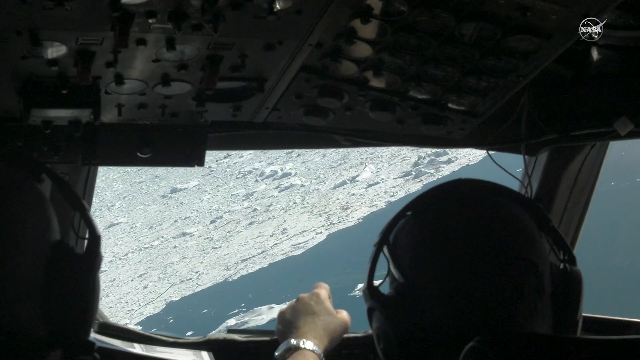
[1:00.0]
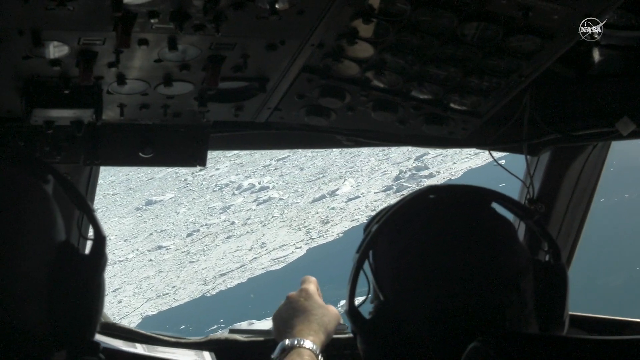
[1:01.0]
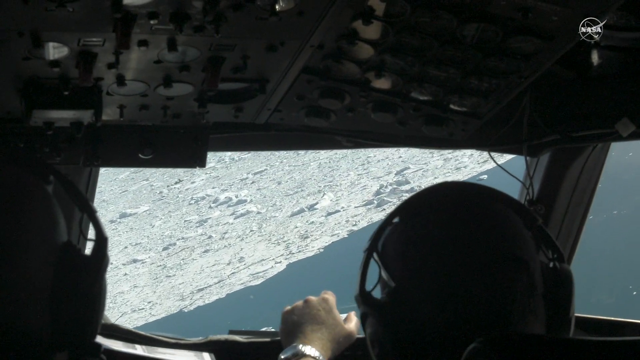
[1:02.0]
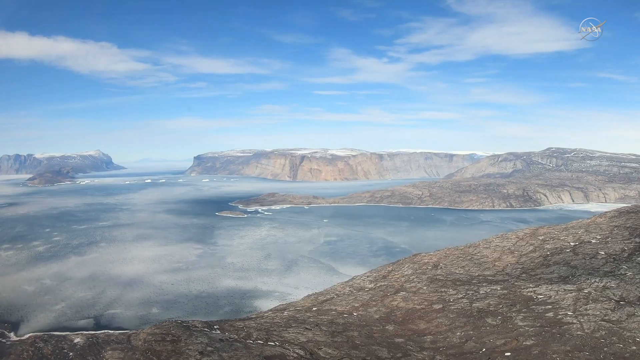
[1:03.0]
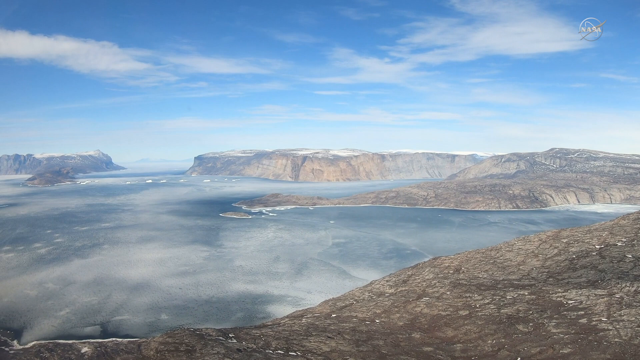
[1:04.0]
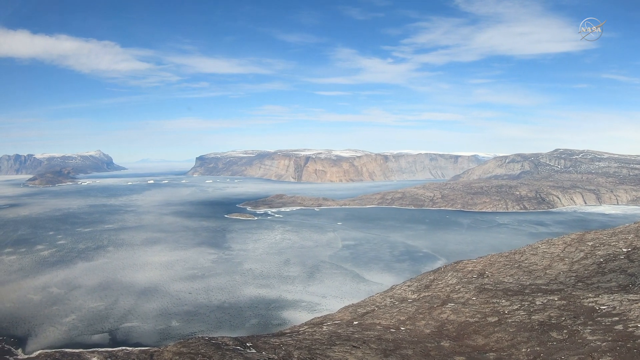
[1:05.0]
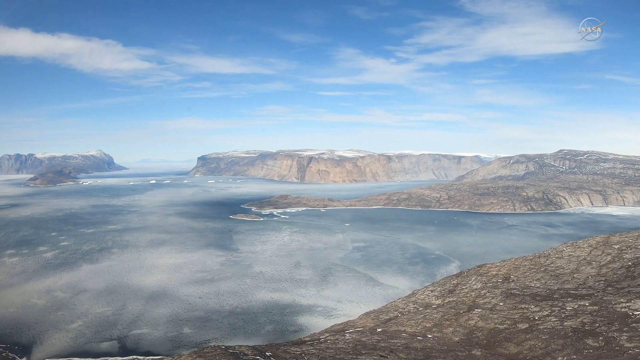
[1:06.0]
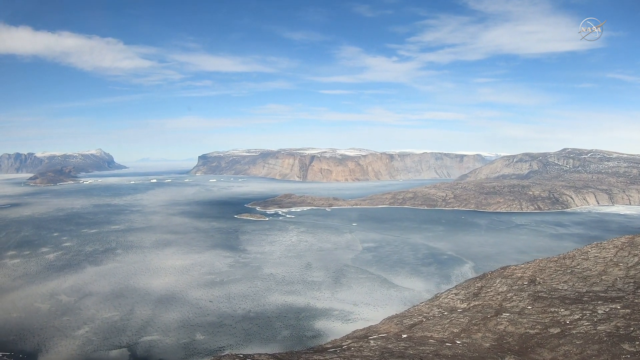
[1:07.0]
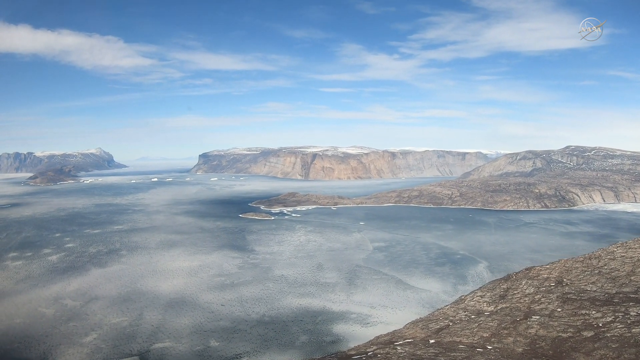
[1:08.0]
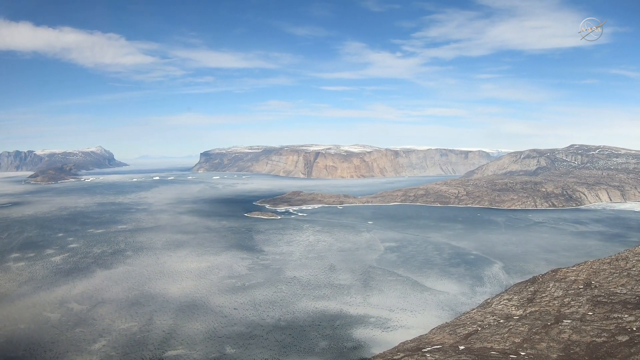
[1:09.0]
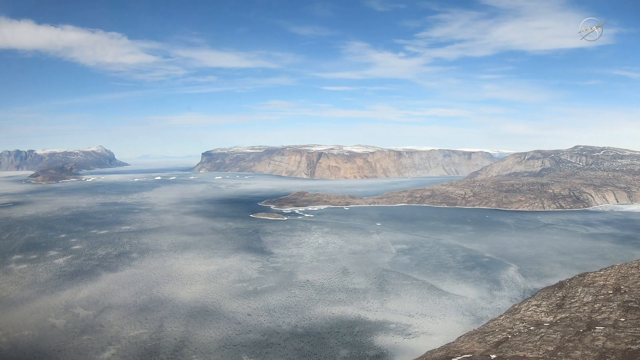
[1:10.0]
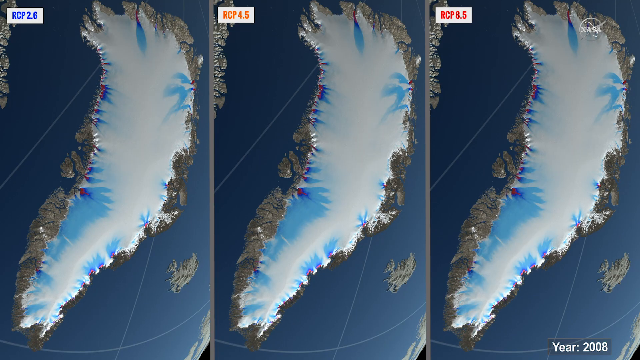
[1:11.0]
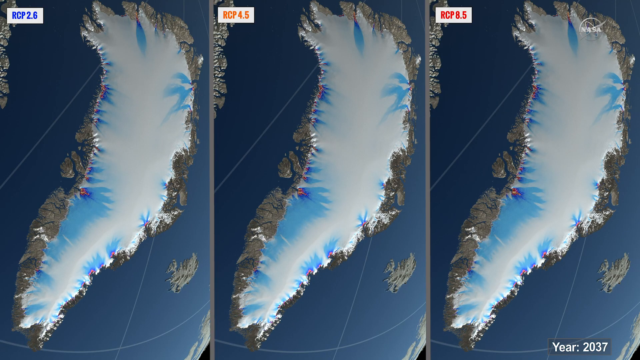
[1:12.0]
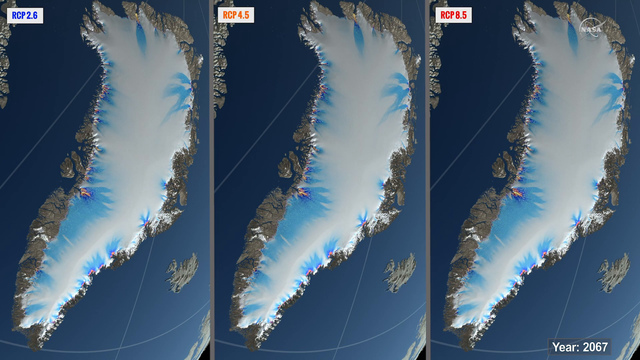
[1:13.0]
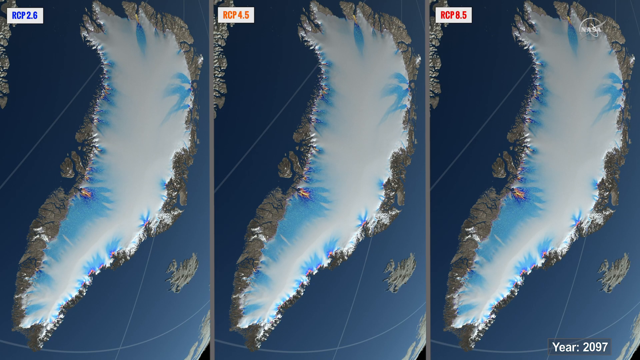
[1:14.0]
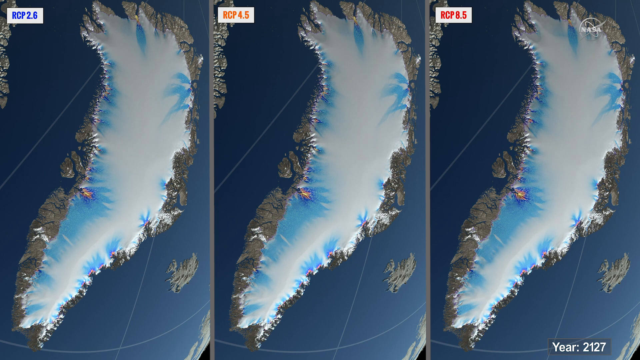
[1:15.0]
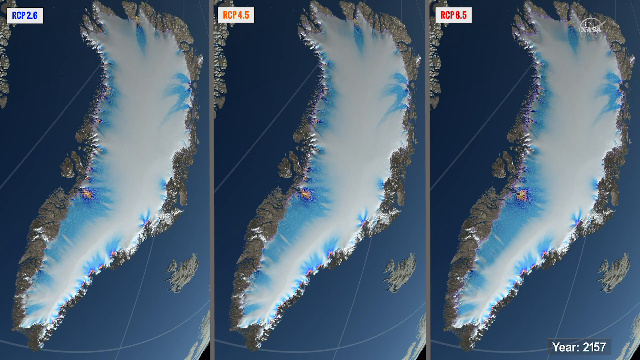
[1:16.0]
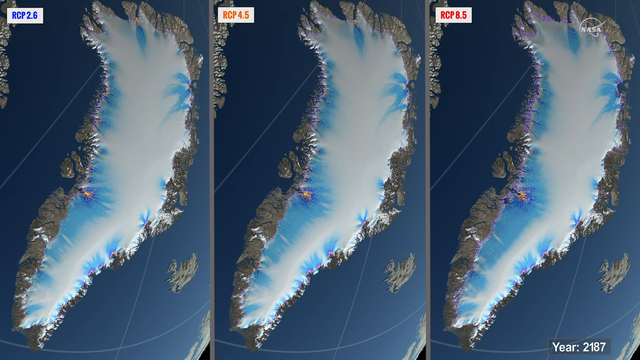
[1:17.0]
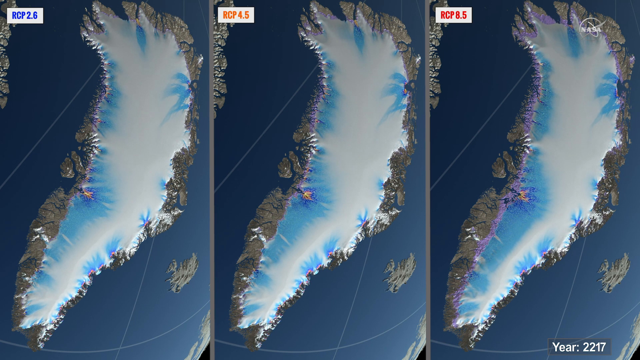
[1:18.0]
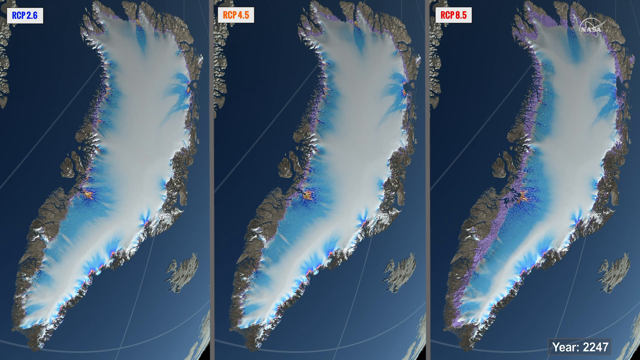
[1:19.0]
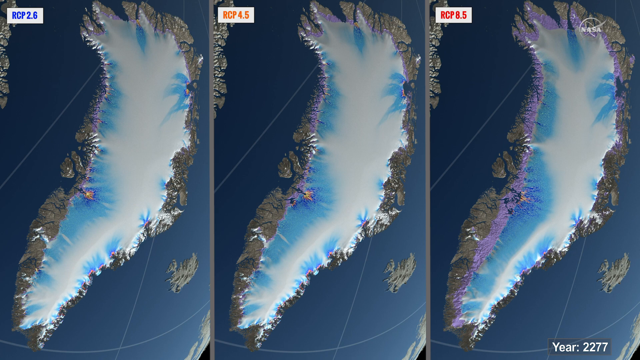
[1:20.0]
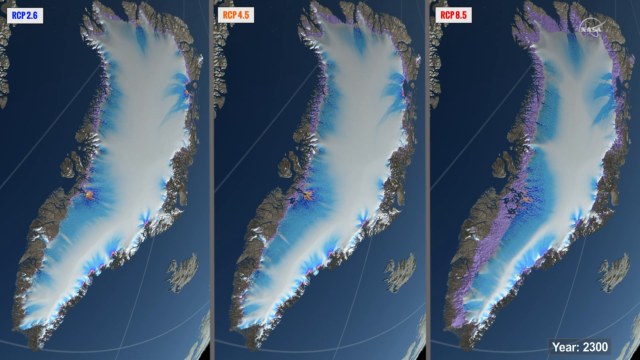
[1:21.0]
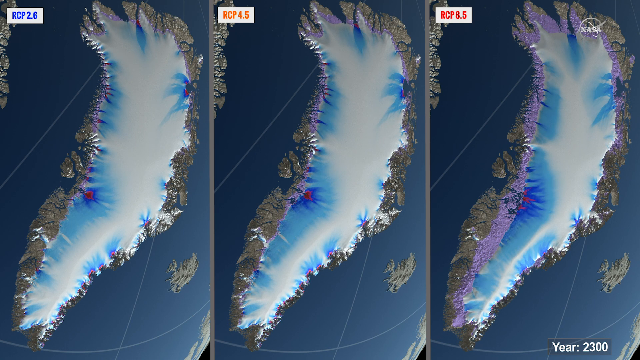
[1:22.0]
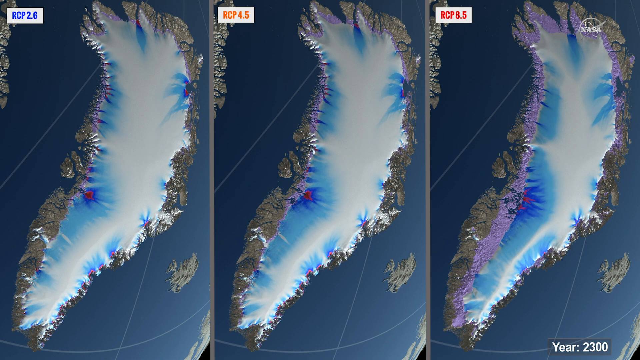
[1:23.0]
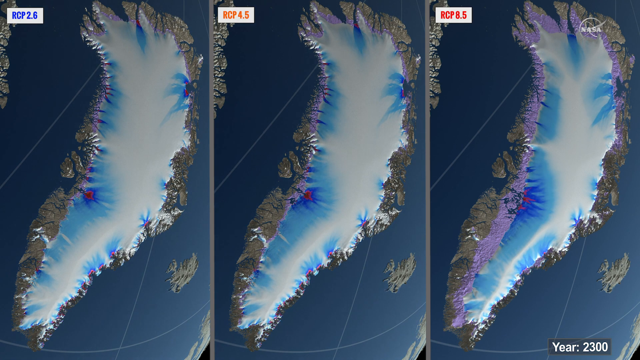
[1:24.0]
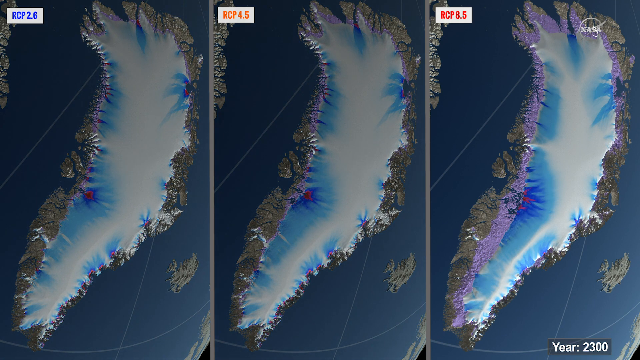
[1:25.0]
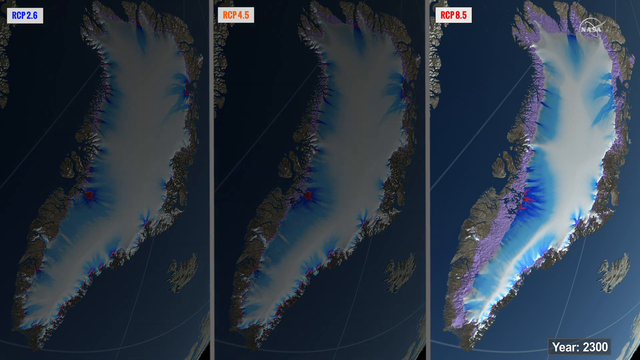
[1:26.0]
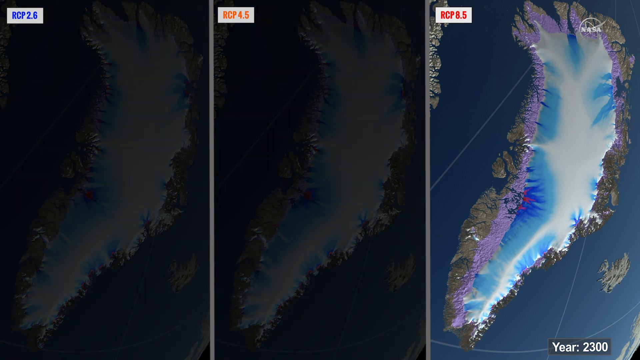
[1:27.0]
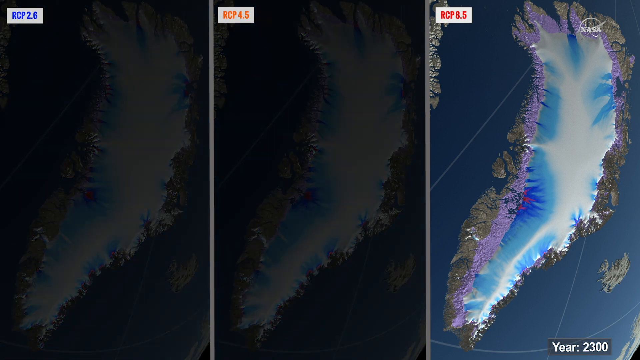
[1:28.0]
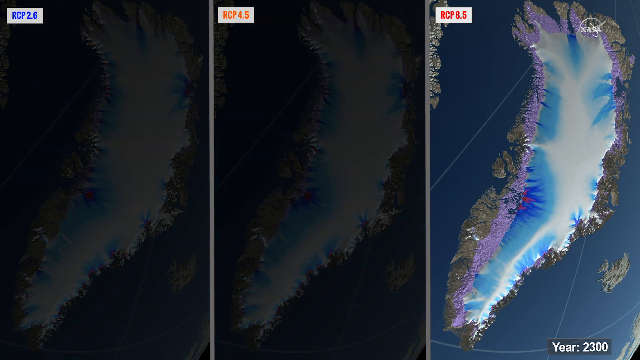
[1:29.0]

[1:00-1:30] Inside the cockpit of an airplane, the pilots look out, with the ocean to the right and the ice sheets to the left. The next scene shows a large, sprawling area of ocean on the left and land on the right, apparently Alaska in the summertime, where the ice sheets have melted and exposed a large rock area. The video then shows three different scenes side by side, on the left, center and right, each labeled in its upper left corner. They apparently show the expansion or recession of ice sheets over time on one island area, possibly from a climate model or possibly from actual satellite photographs.